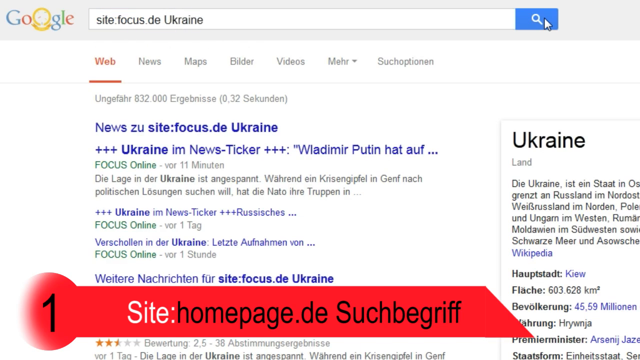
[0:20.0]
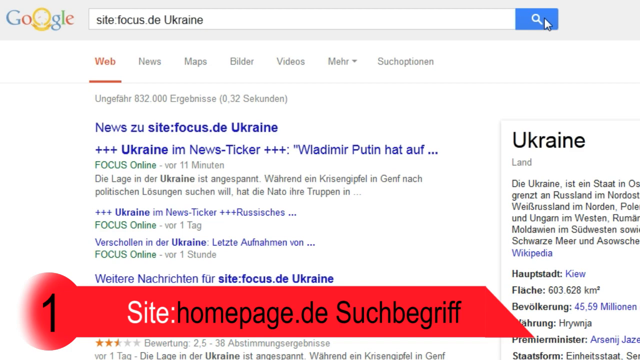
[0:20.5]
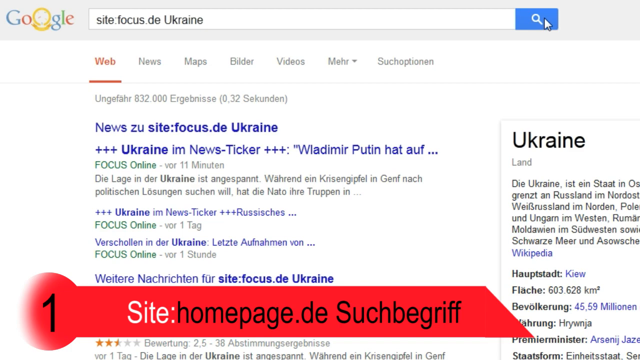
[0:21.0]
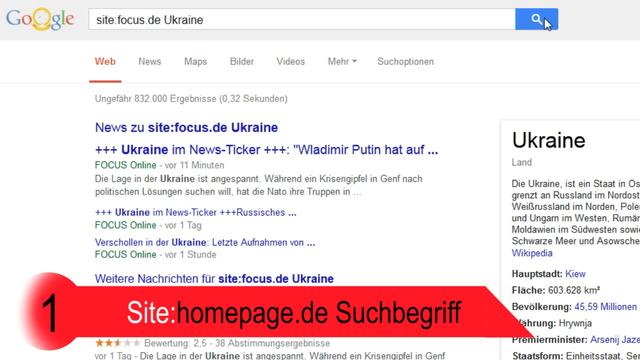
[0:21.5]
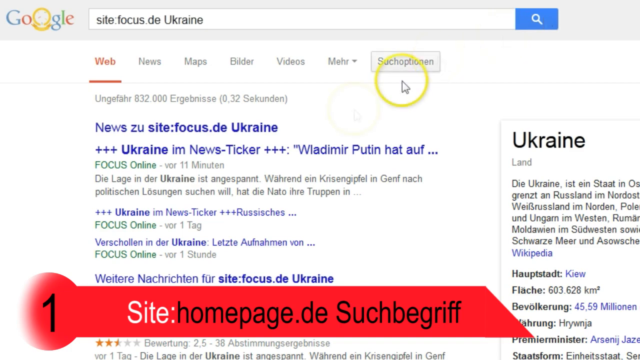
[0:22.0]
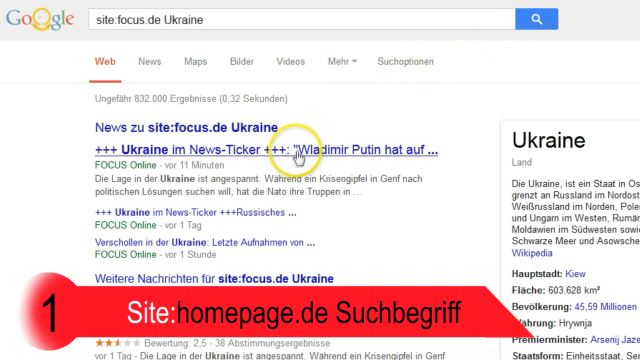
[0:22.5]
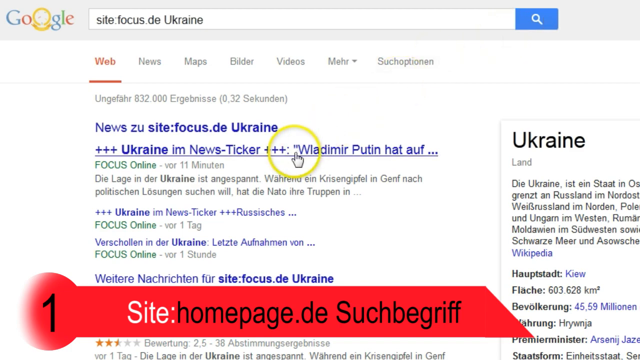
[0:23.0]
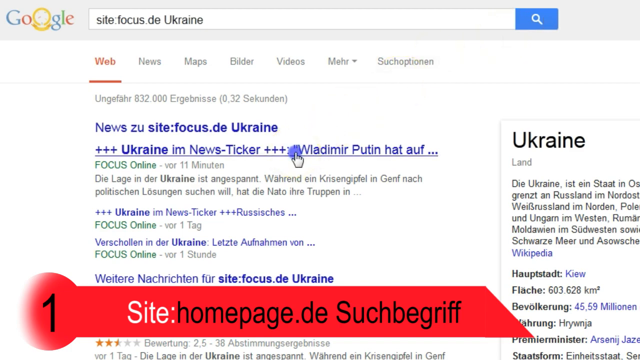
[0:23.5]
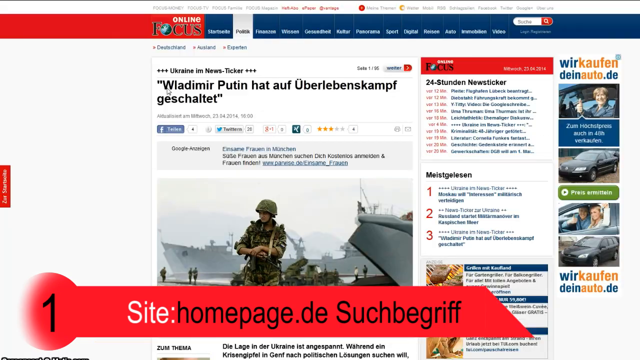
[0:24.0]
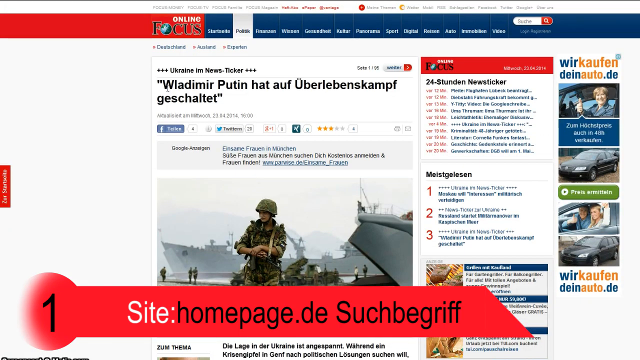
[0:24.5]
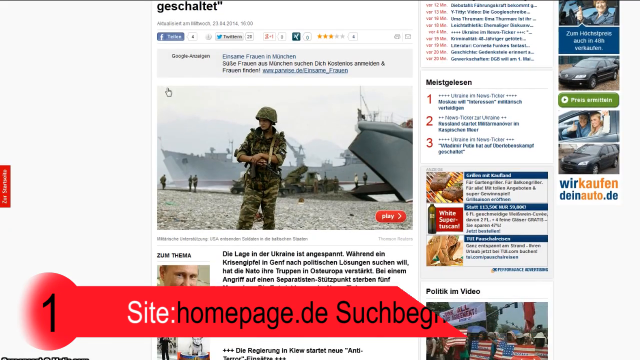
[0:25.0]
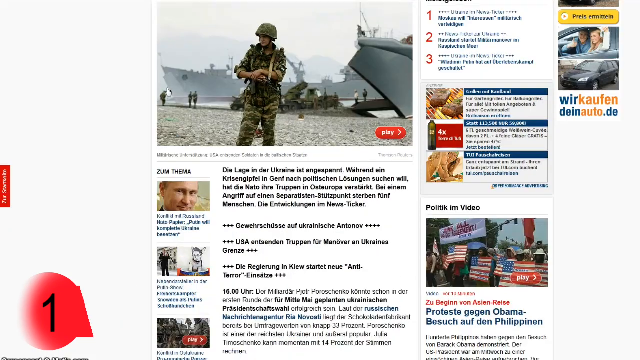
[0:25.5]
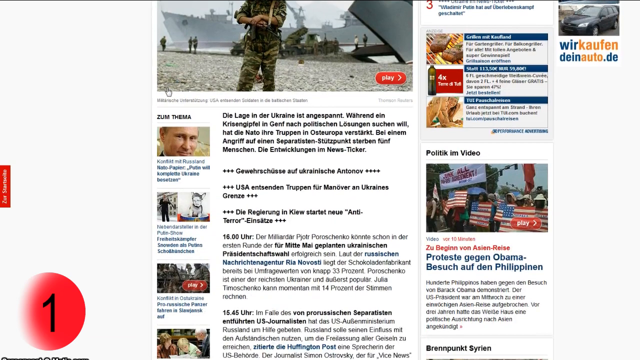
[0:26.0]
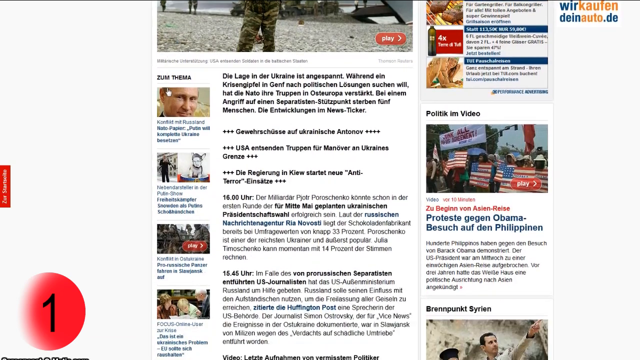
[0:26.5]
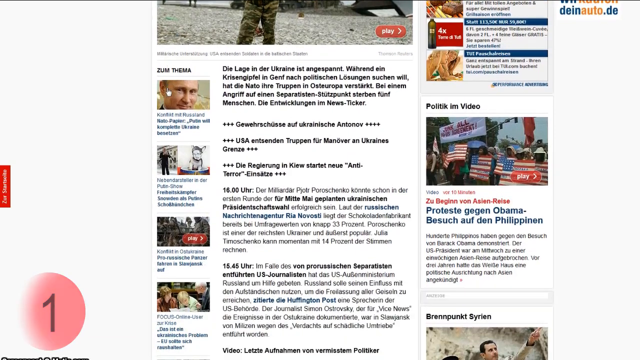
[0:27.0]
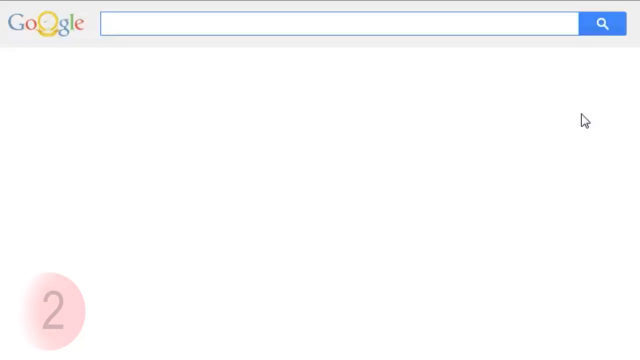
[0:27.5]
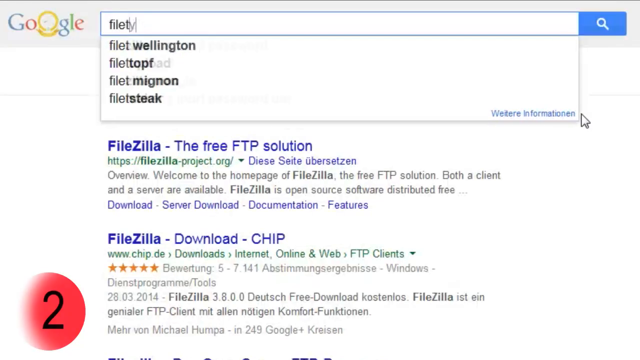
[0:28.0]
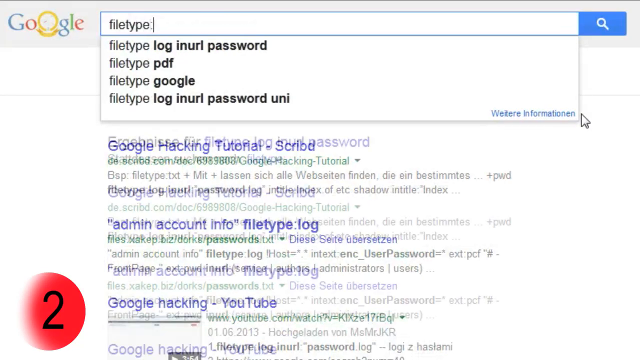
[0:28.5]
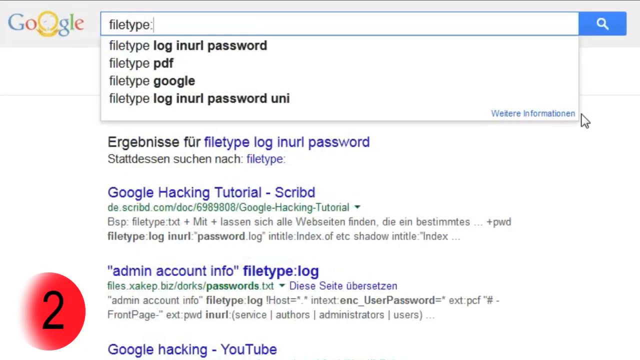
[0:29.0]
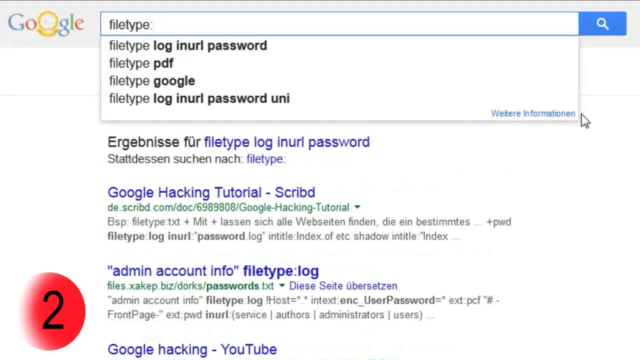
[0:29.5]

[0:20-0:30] A Google search page shows multiple results, with "site:focus.de Ukraine" in the search bar. The Google logo is in the top left corner, its second O in gold with a gold ribbon underneath that says "E=HV". At the bottom of the screen is the number one in a red banner that also says "site:homepage.de" followed by a word in German. All of the words on screen are in German. On the right side of the screen it says "Ukraine", along with information about it such as the area, length and brief Wikipedia information. The person recording clicks on the first result, which opens a web page from the site Online Focus showing an article about Vladimir Putin with a title in German. A soldier is also shown standing in front of many ships.